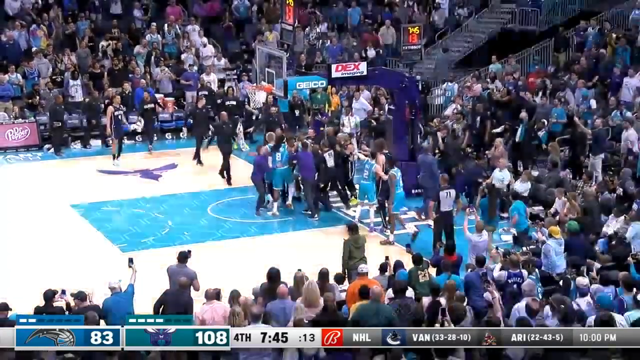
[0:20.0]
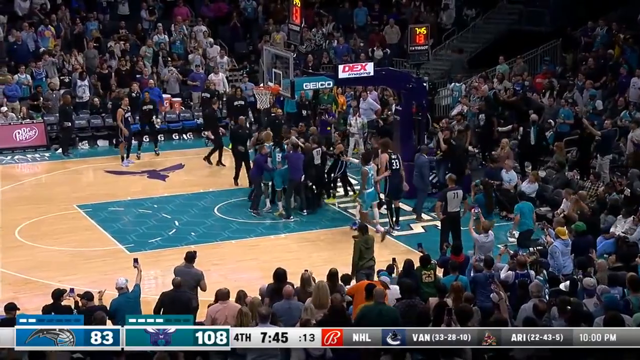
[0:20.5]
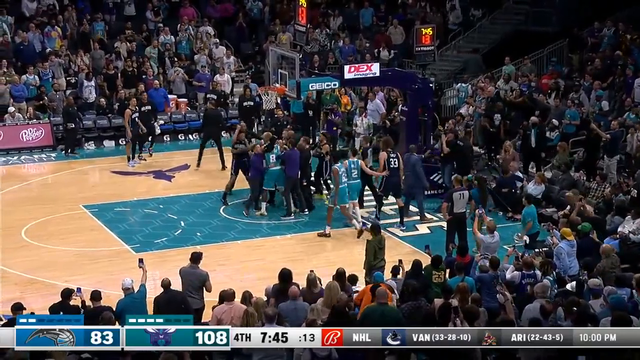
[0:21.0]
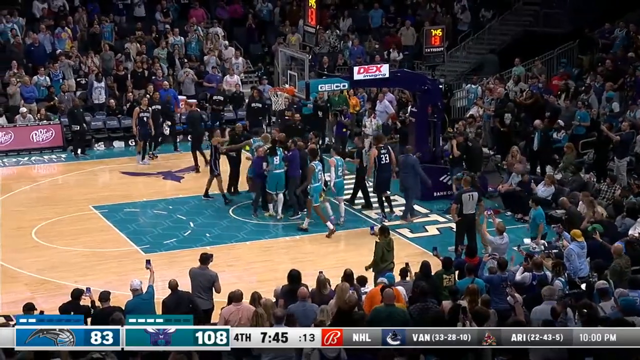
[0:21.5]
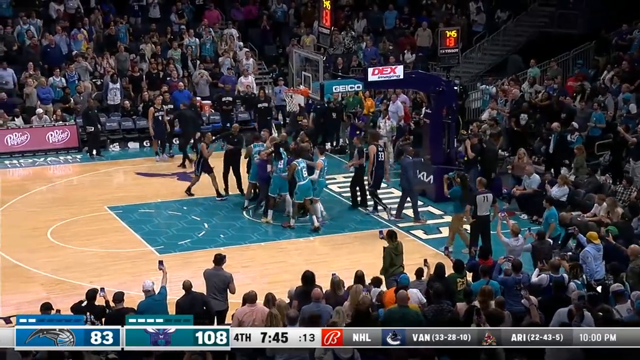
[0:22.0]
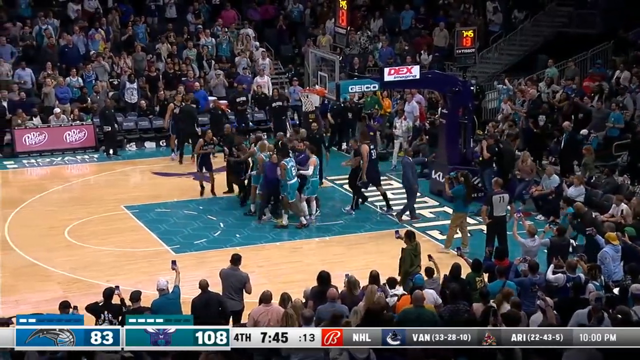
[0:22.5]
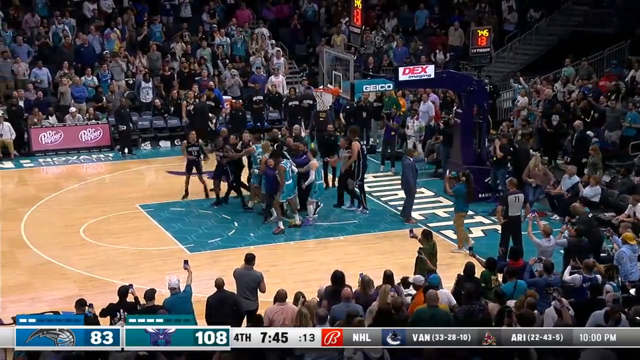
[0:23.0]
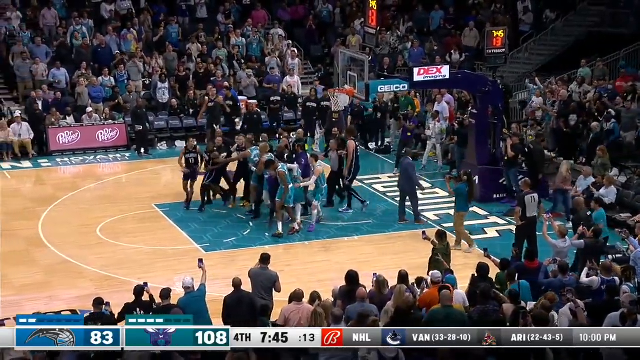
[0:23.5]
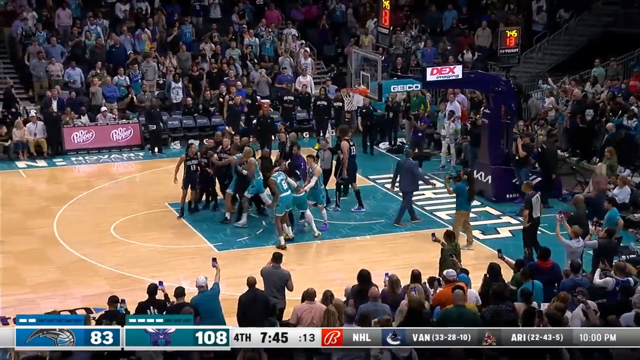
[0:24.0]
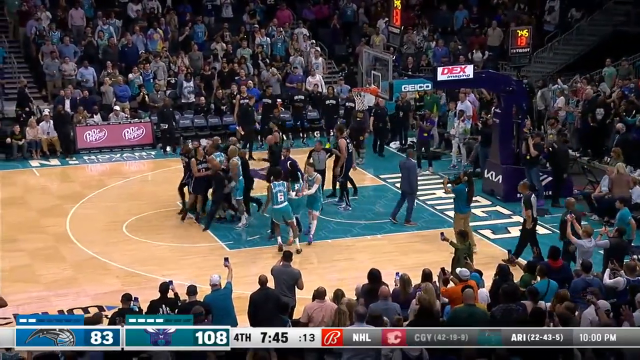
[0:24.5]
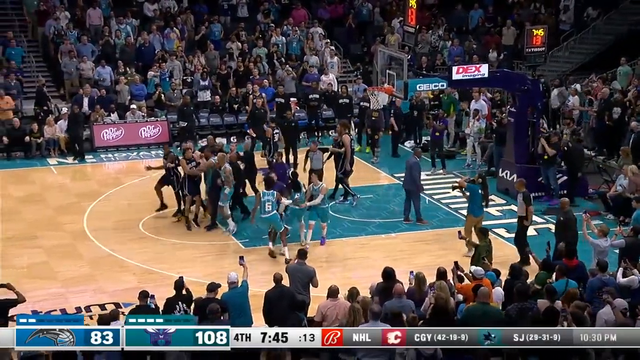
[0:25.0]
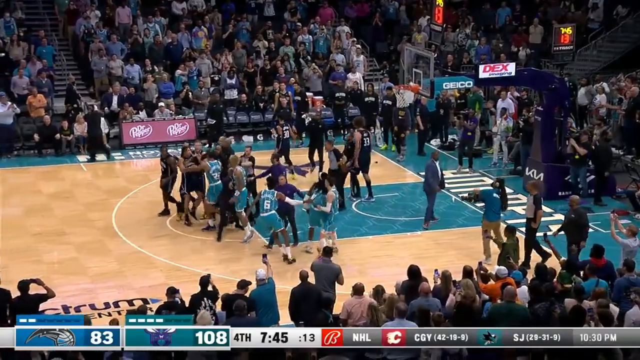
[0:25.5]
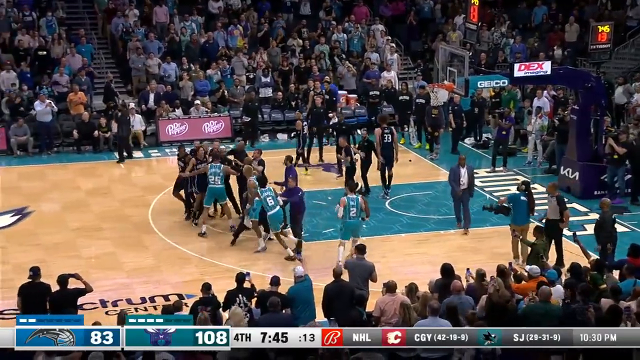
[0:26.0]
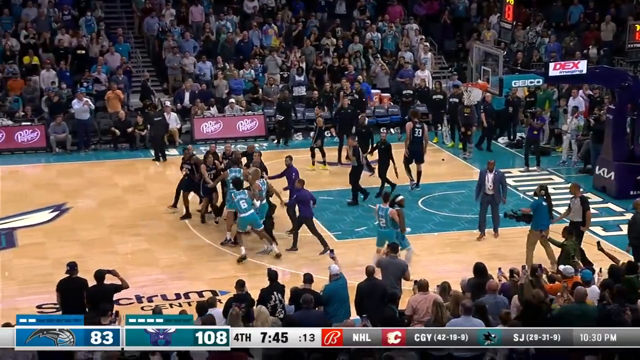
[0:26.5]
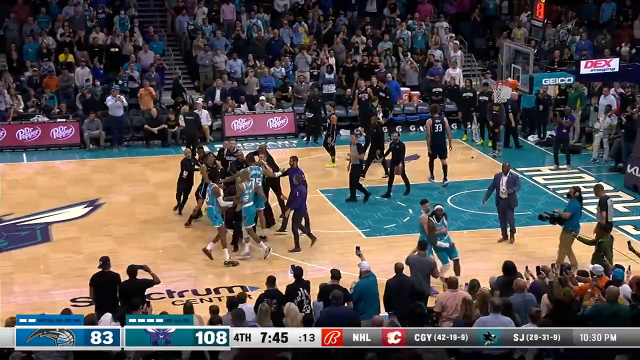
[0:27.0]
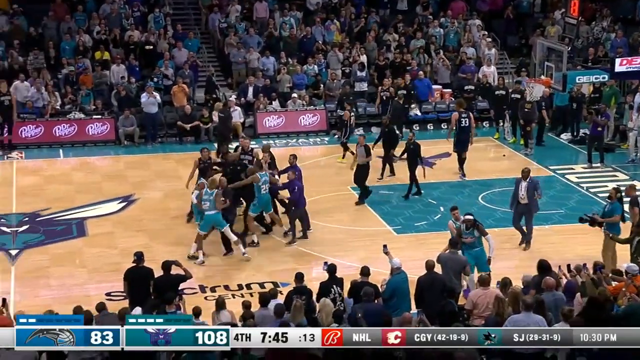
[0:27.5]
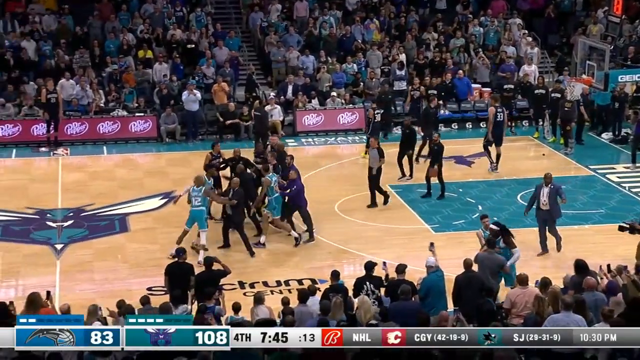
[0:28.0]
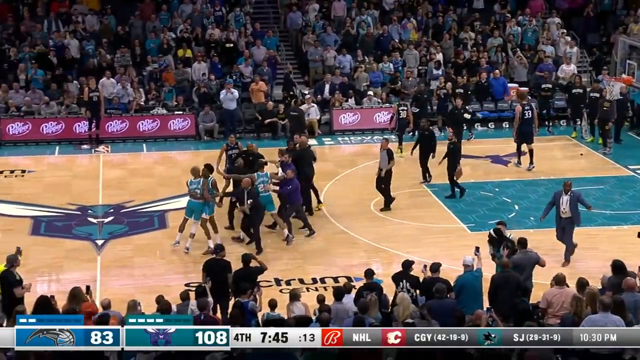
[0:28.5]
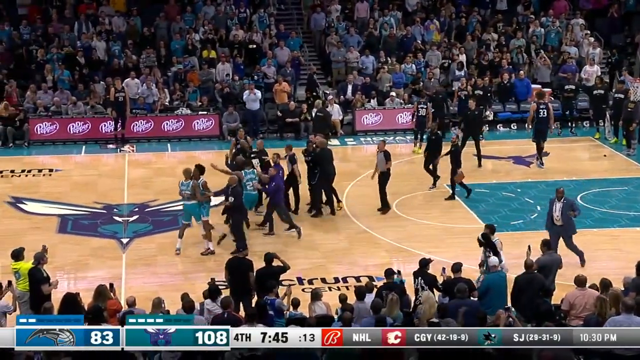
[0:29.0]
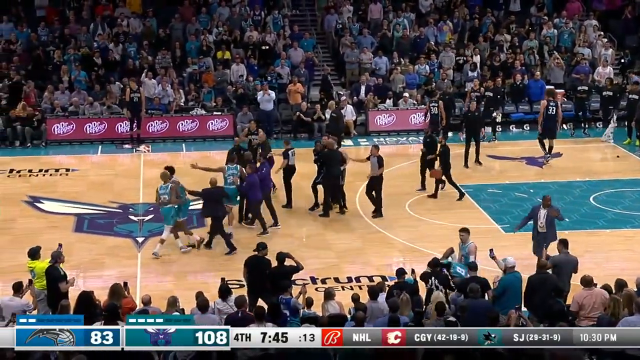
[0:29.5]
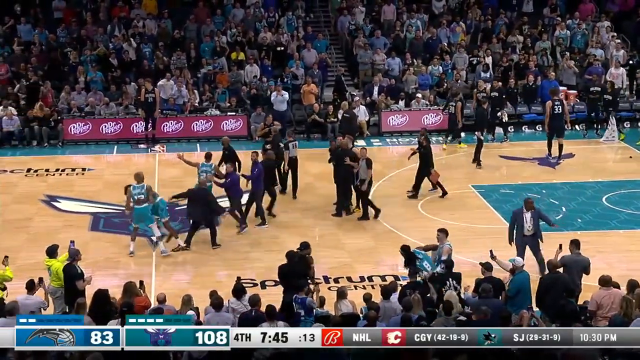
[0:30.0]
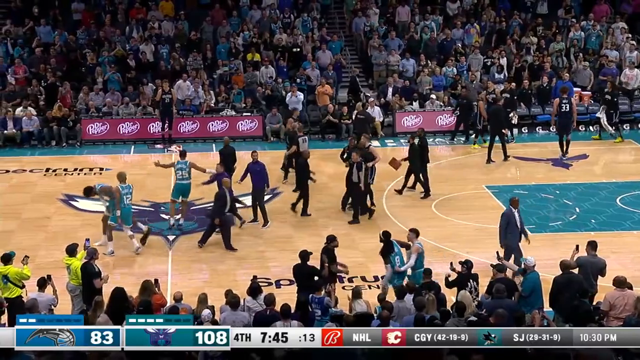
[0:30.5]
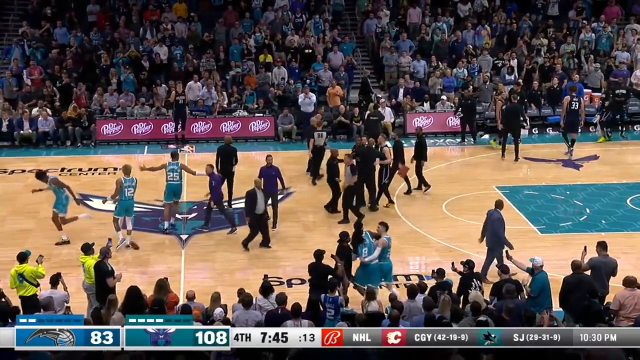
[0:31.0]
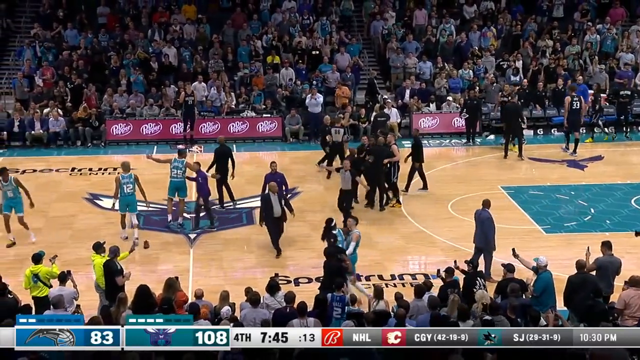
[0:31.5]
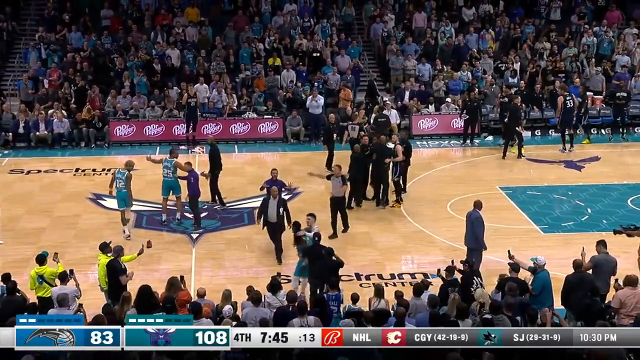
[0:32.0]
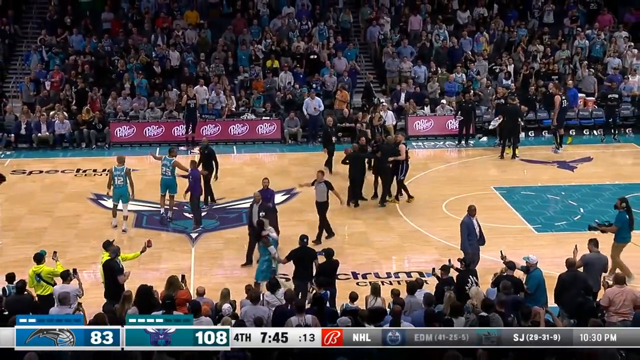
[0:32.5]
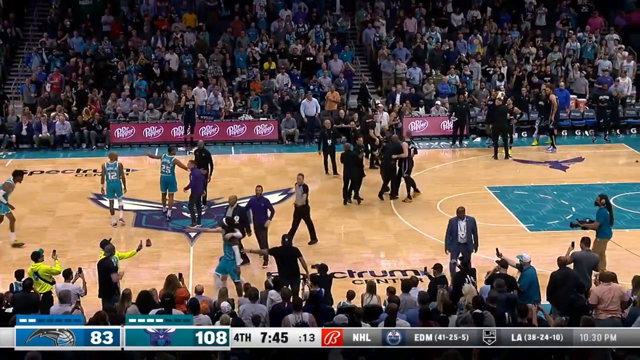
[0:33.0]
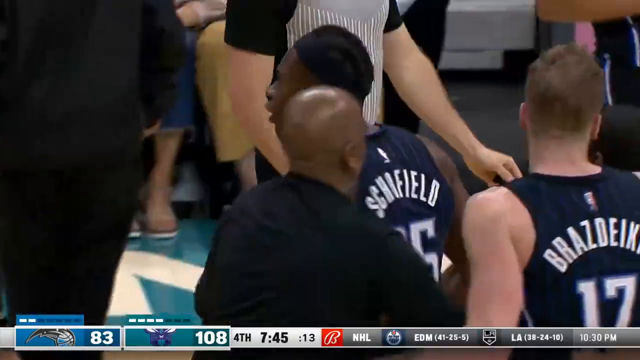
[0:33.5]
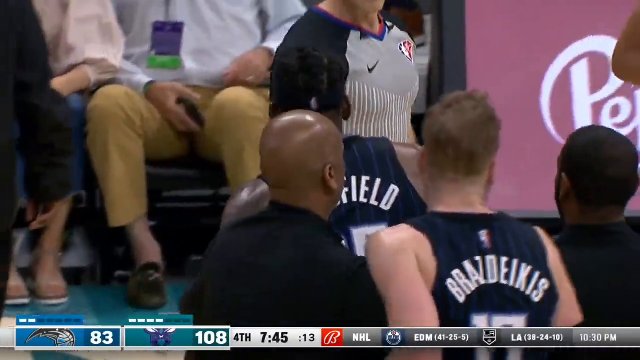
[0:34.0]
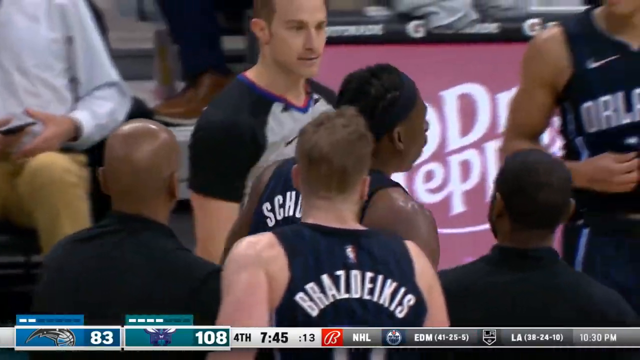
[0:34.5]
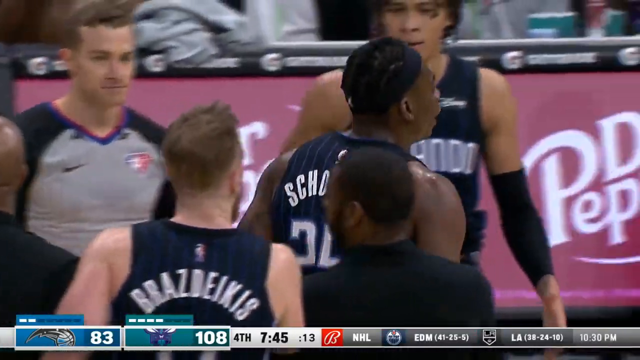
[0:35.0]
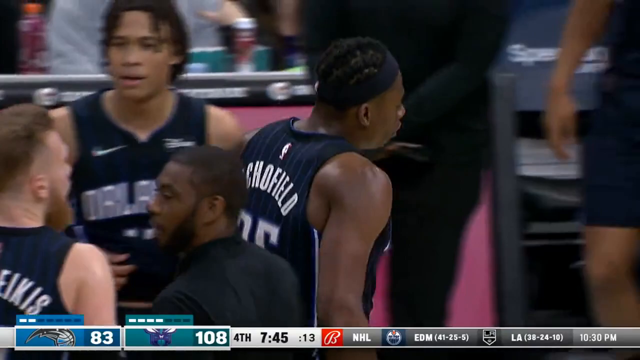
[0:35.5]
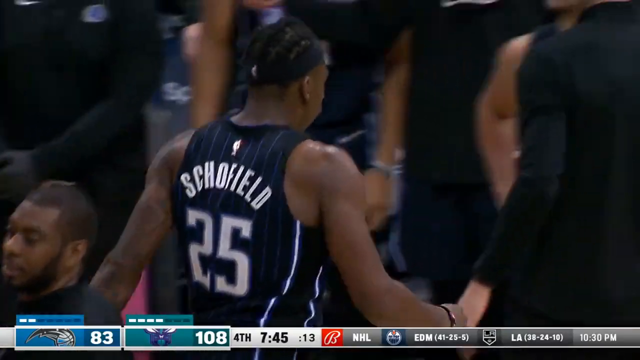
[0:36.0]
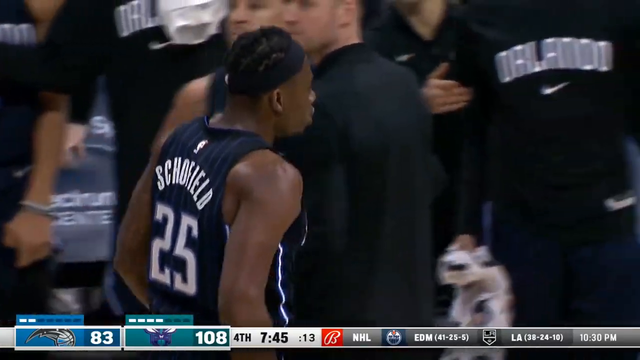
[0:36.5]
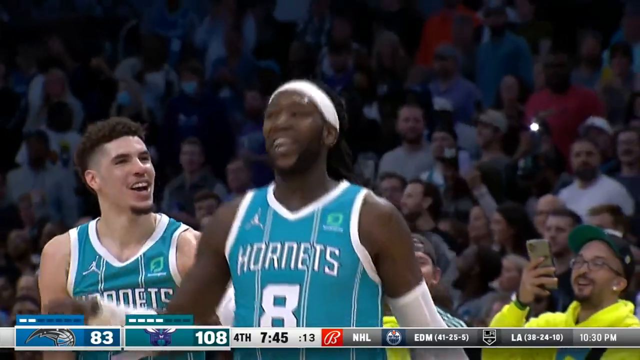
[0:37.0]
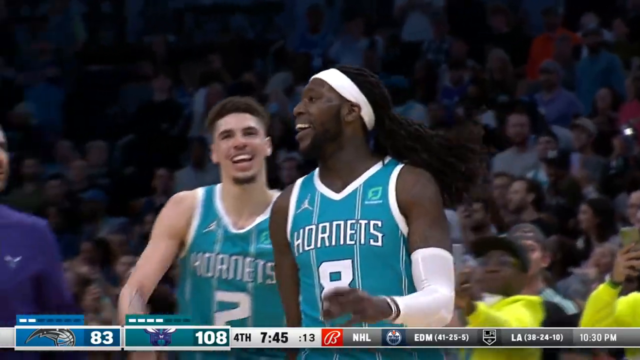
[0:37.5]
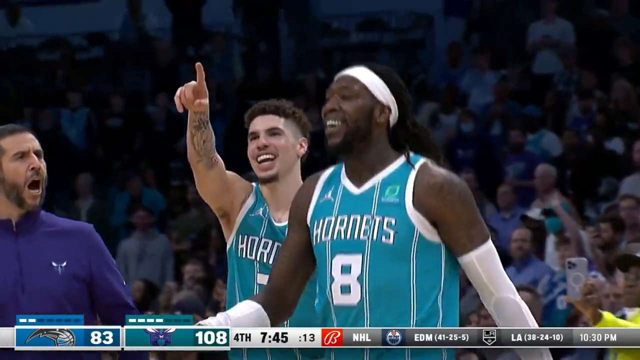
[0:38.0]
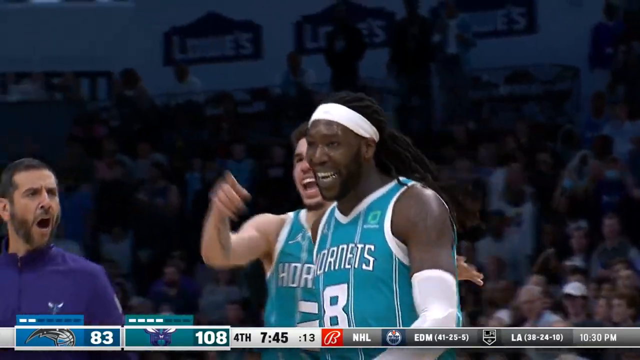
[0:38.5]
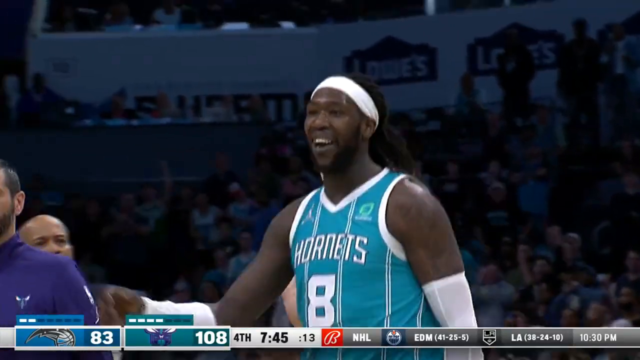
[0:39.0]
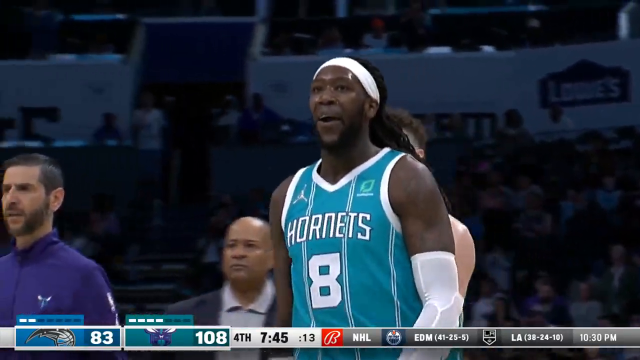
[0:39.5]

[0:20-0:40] The basketball players, one team in teal blue and the other apparently in black, are sort of huddled together and shoving in what looks like an altercation. Referees go up to the players. The floor is a typical wood gym floor with teal blue on it, so this apparently is the home court of the teal team. As the players start to disperse, it becomes visible that the teal blue team is called the Hornets. Players on the Hornets sort of laugh as if they find it funny, while players on the black team walk away from the camera with their backs turned, not looking very happy. The altercation apparently goes in favor of the Hornets.